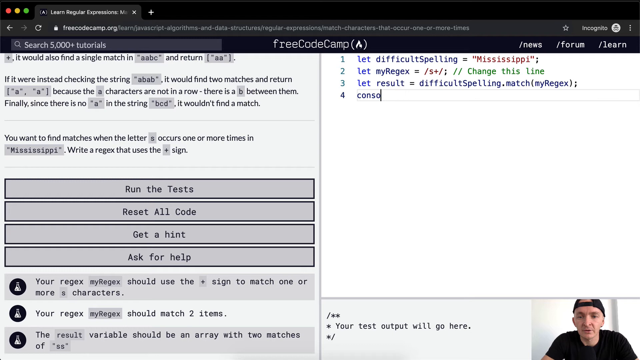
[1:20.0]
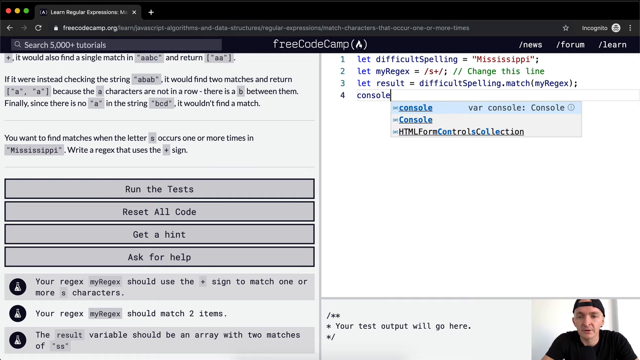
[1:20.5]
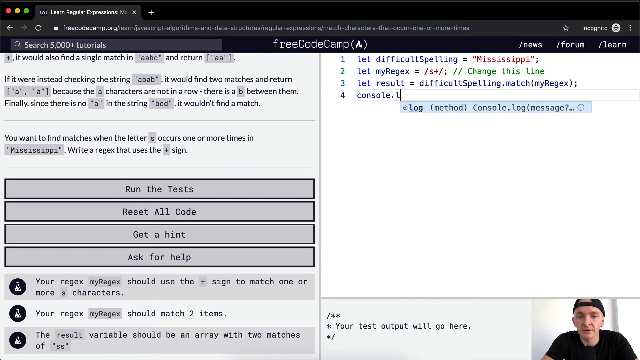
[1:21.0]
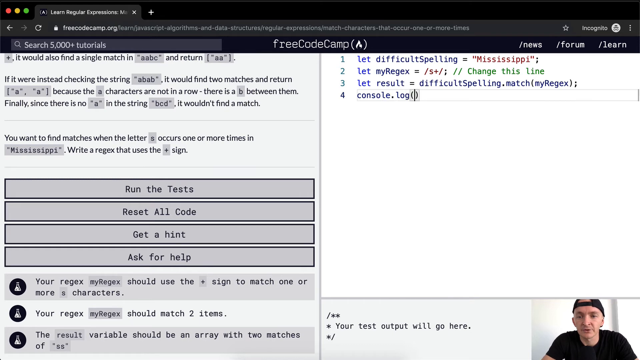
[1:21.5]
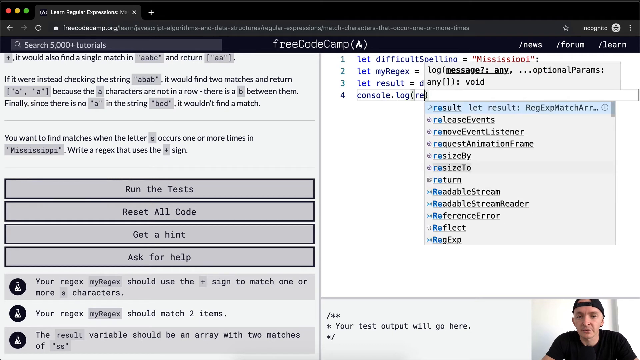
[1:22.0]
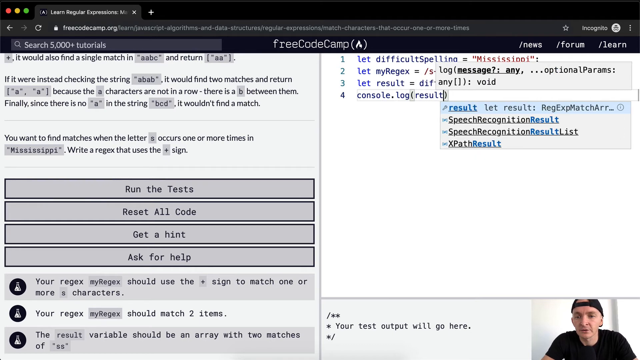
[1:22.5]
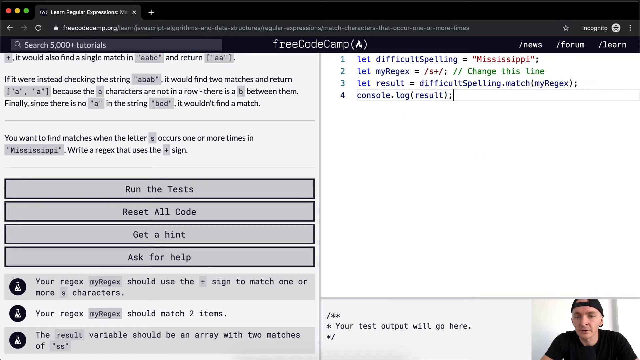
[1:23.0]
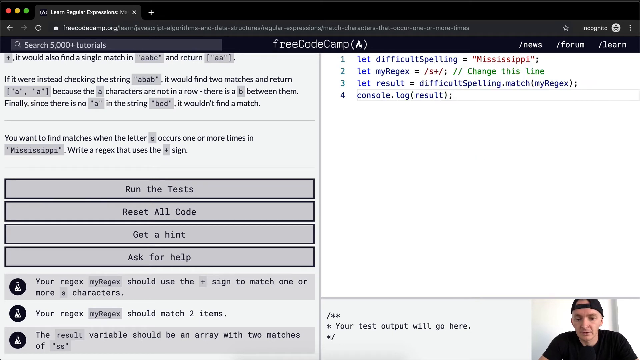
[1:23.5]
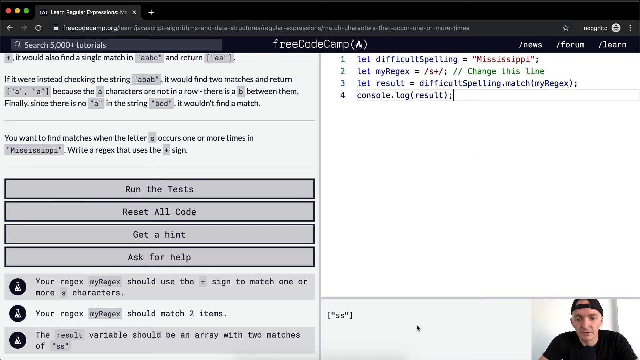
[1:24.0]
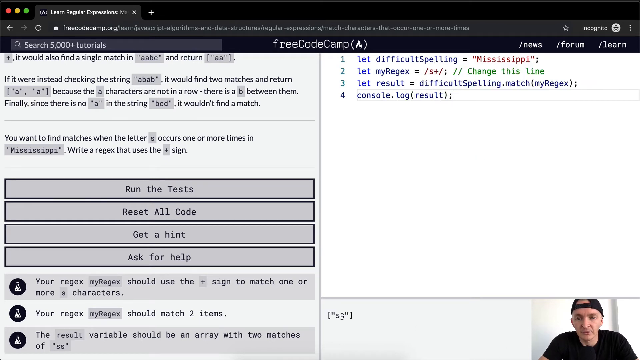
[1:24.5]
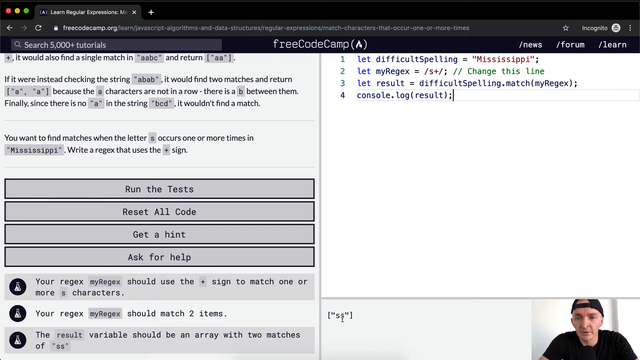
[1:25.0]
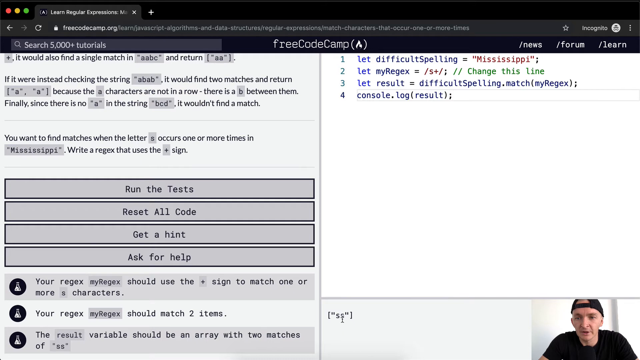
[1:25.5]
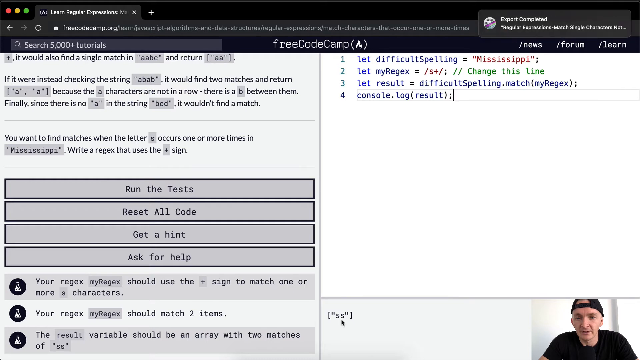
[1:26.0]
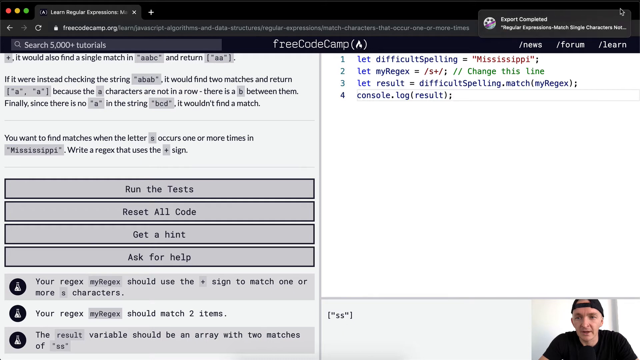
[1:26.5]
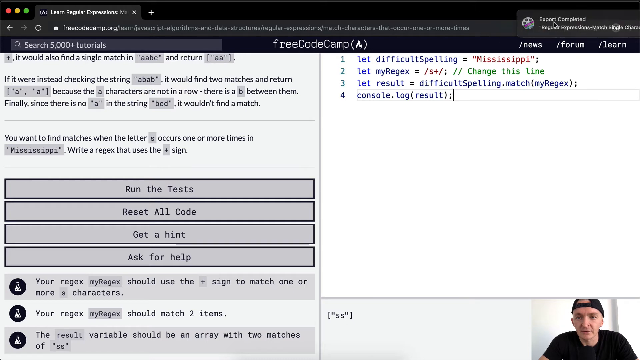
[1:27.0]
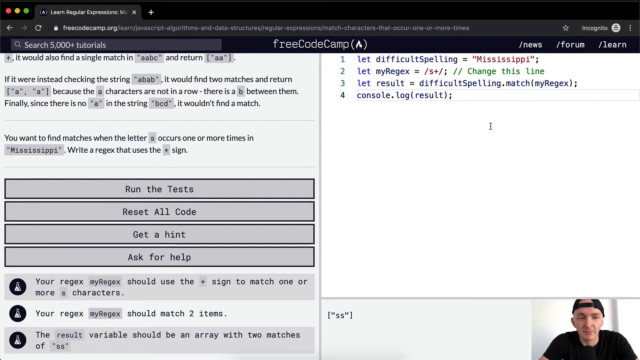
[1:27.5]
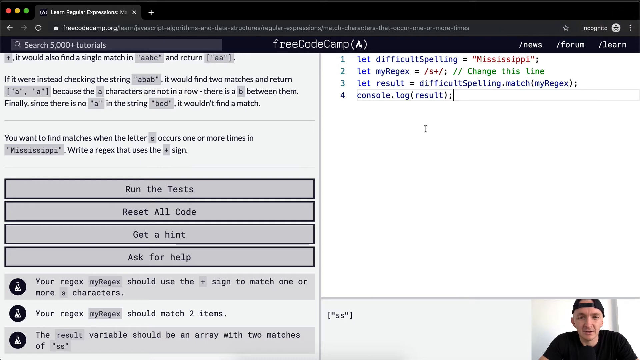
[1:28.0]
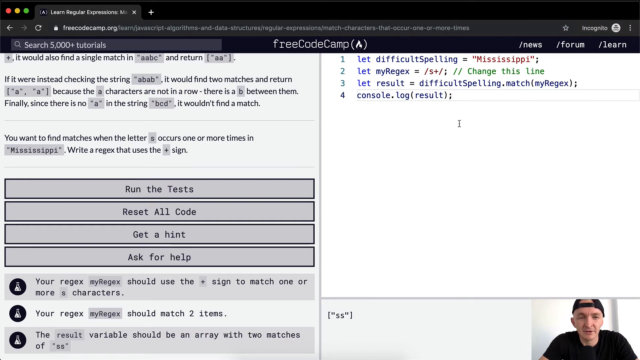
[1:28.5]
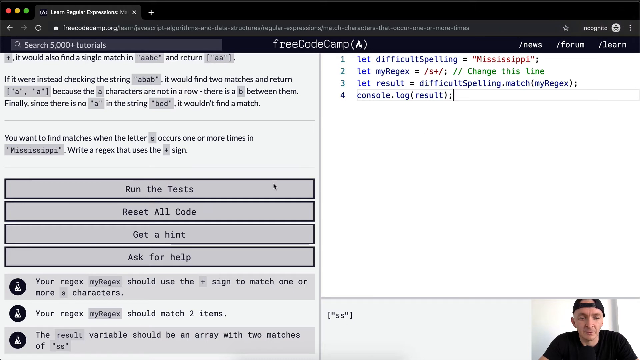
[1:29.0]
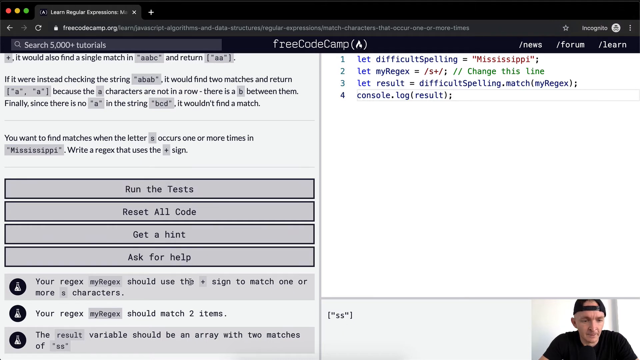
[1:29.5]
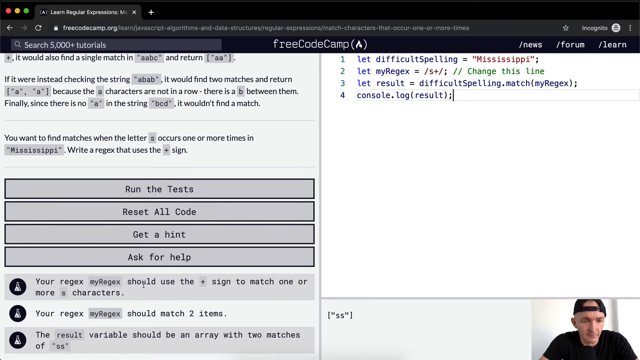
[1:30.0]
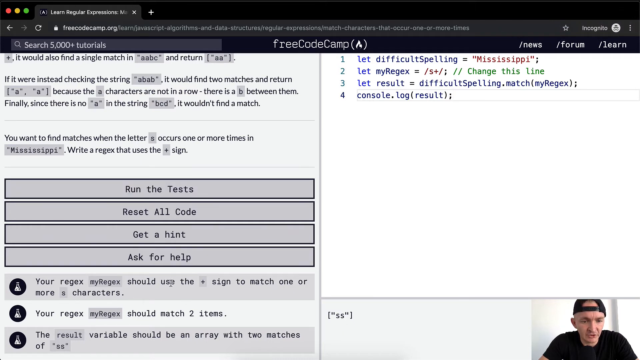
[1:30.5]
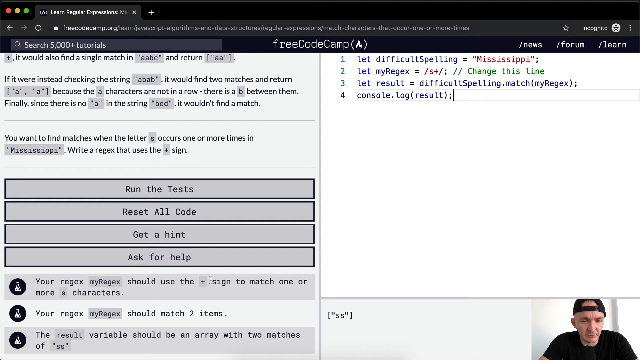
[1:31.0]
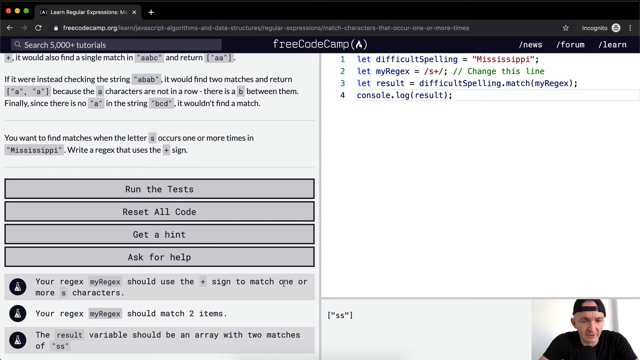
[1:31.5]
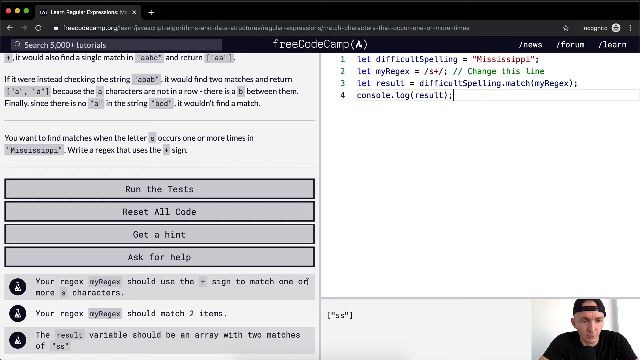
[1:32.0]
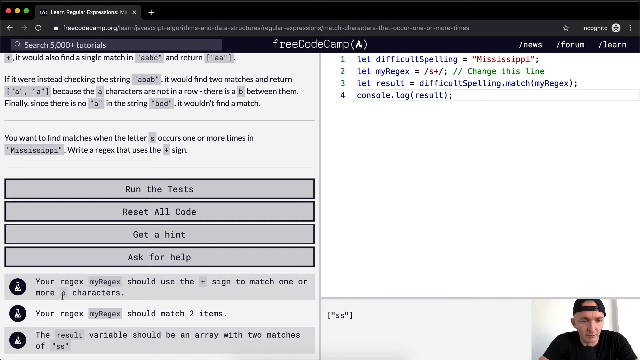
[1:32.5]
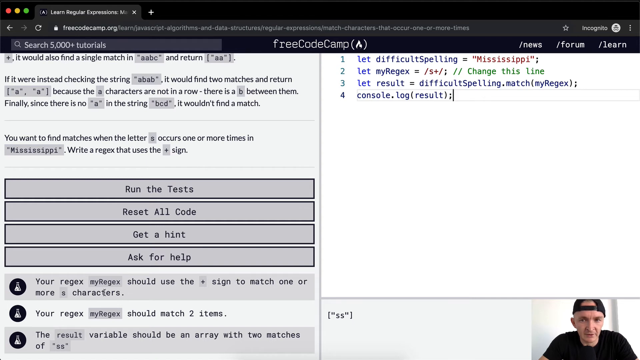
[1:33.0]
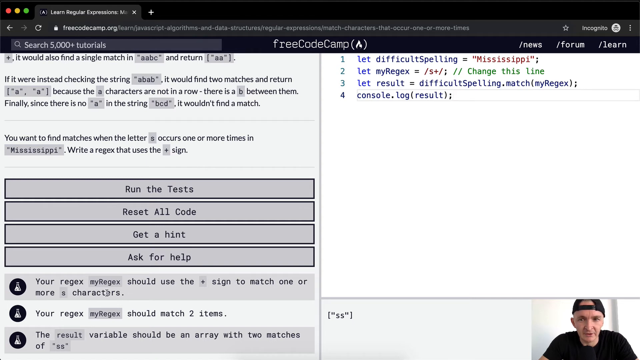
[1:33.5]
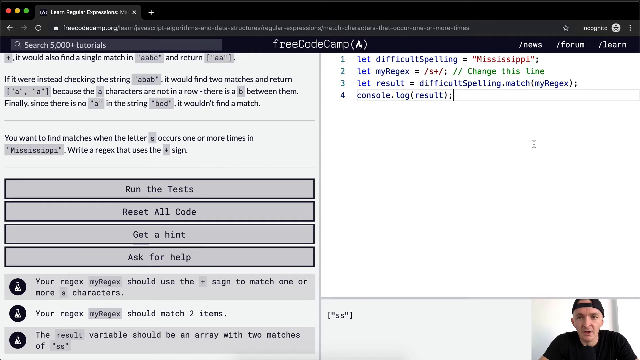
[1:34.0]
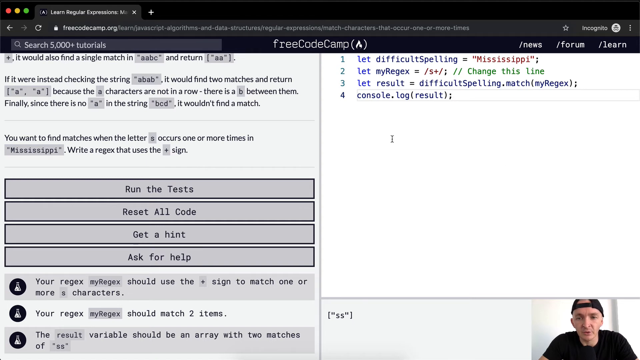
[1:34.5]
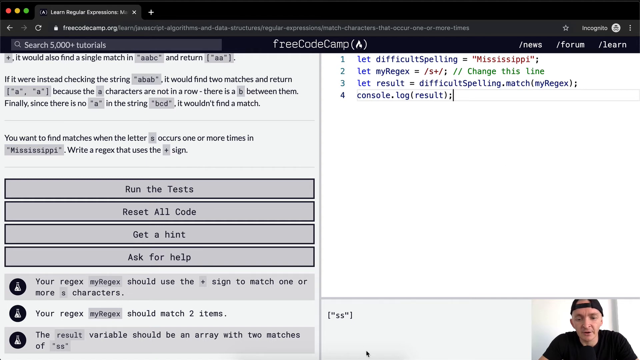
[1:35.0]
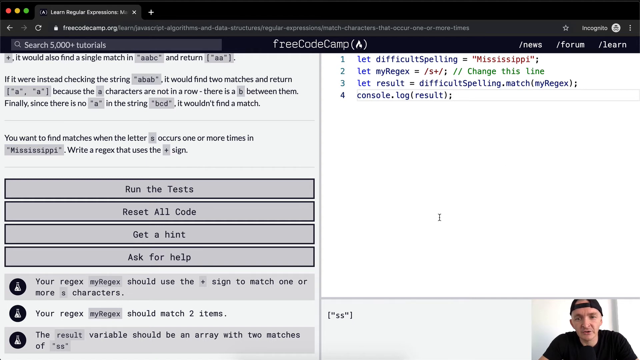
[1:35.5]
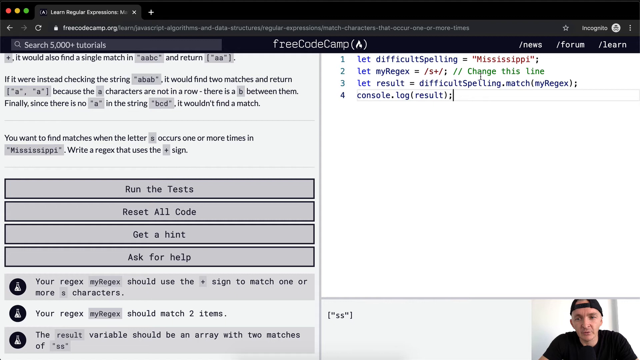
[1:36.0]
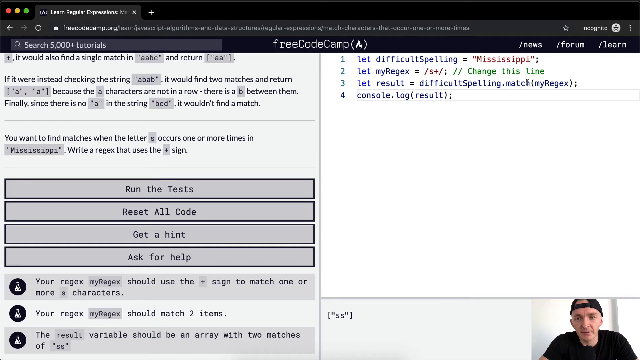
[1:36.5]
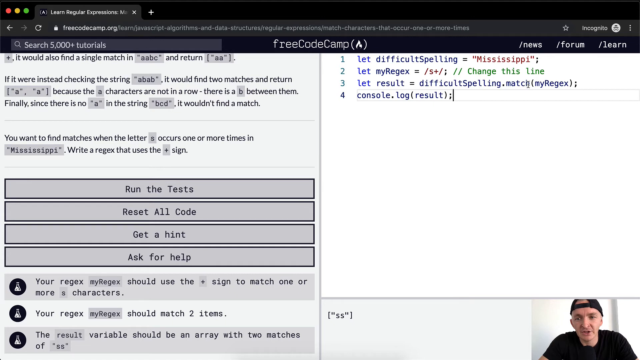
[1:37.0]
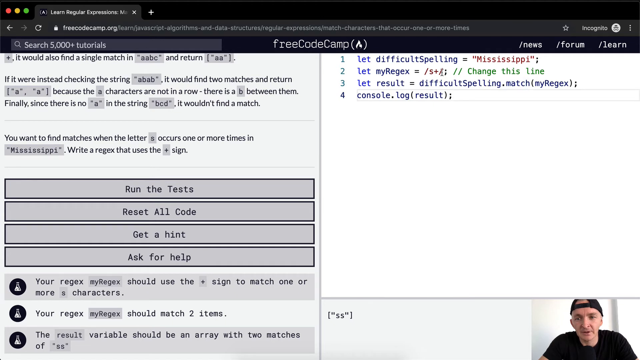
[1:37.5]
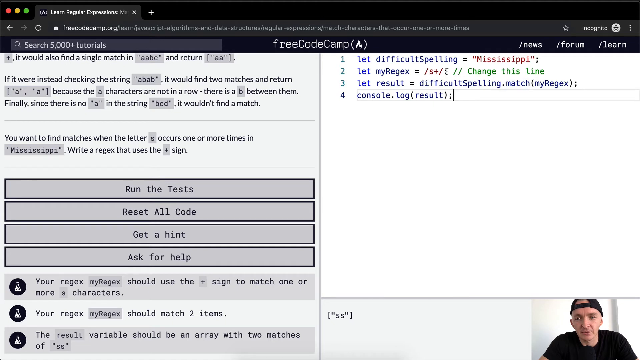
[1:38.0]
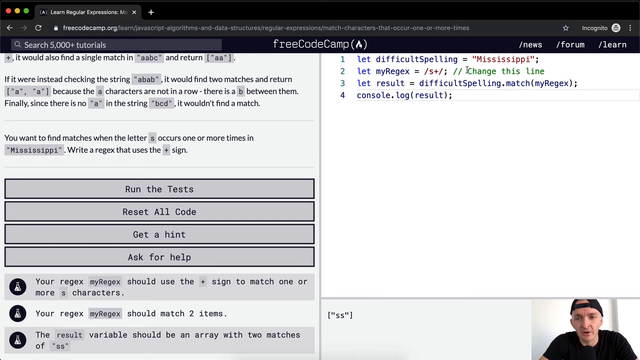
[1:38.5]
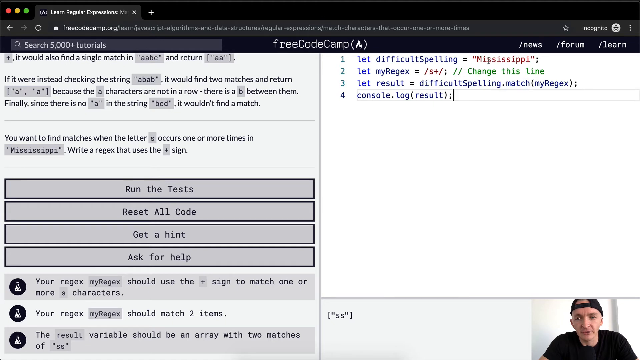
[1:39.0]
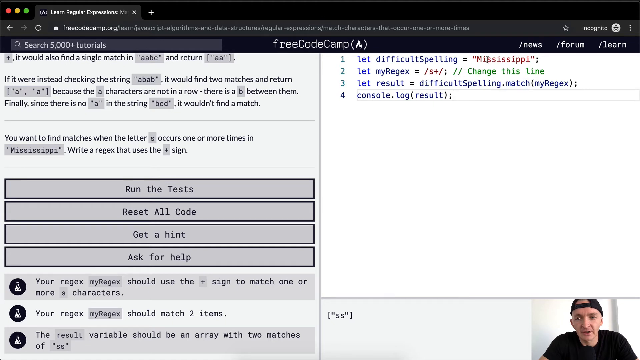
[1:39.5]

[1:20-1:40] An open tab says "free code camp" at the top with an "a" in parentheses beside it, and on the left is a search bar that says "search 5000 plus tutorials". Below, the screen is solid white with a line dividing it down the middle. The left side has written instructions on how to solve code and where to put code to form matches and return the desired output. The right side is a work console area for writing and testing code. The instructions on the left include buttons for "run the test", "reset all code", "get a hint" and "ask for help". The narrator appears in the bottom right corner, wearing a black ball cap turned backwards and a black t-shirt. He uses his mouse to write code in the panel on the right step by step, then highlights the instructions on the left that go with that code. He moves his mouse in big and small circles to draw attention to areas of the screen.